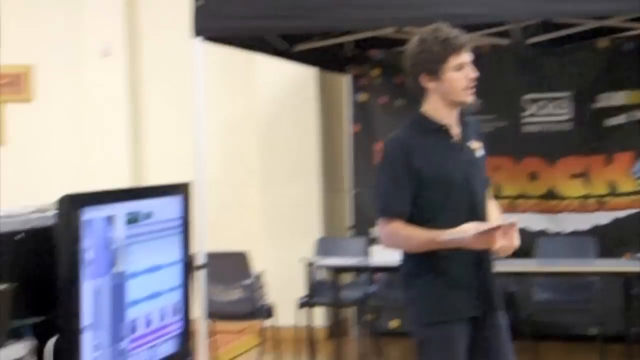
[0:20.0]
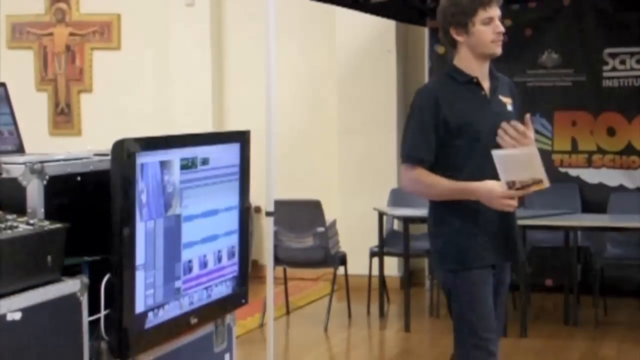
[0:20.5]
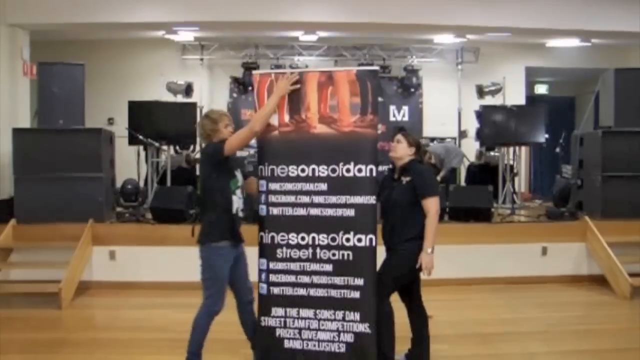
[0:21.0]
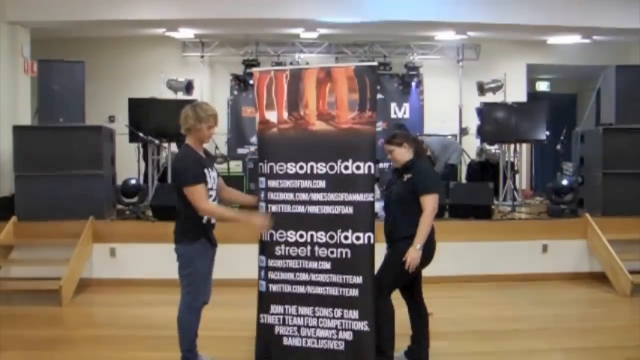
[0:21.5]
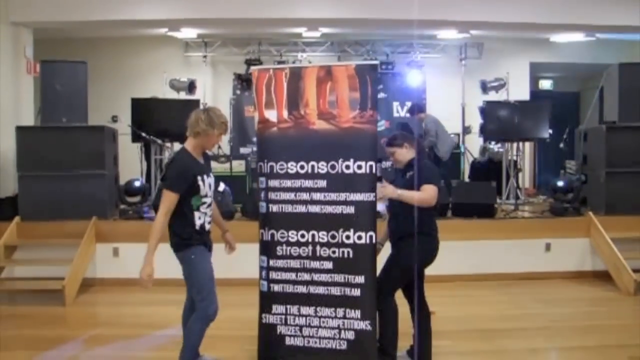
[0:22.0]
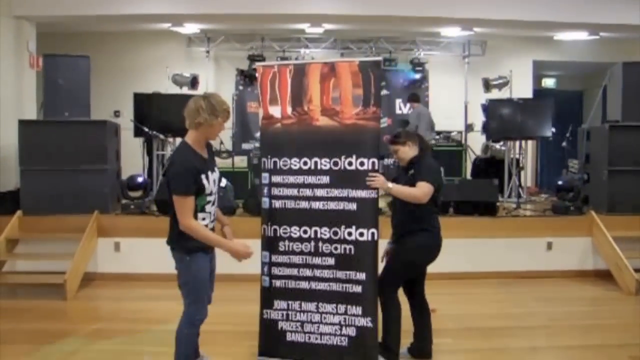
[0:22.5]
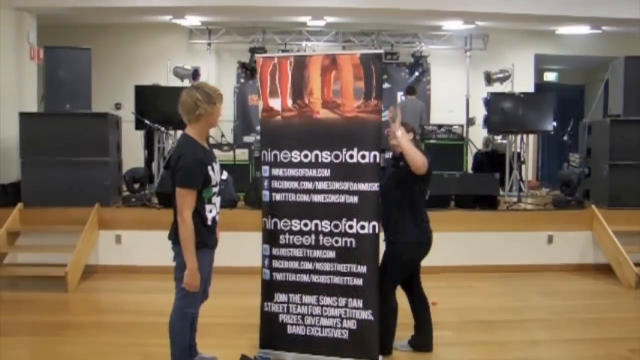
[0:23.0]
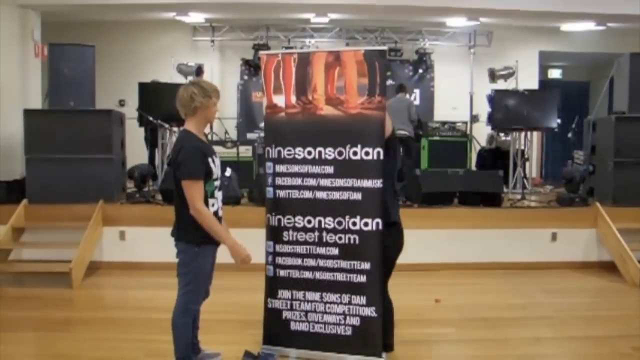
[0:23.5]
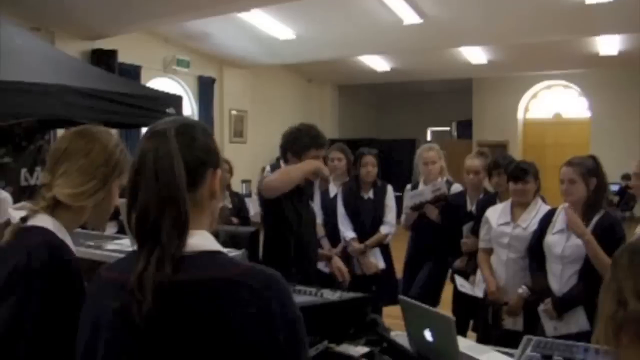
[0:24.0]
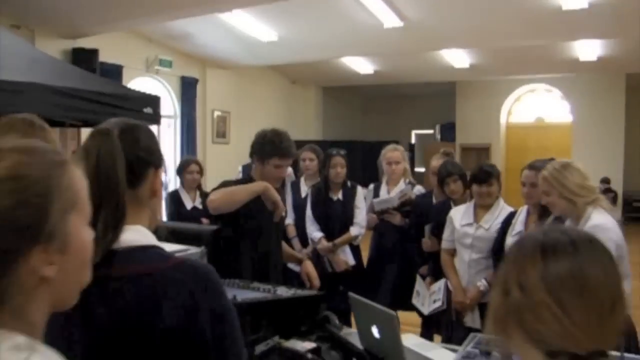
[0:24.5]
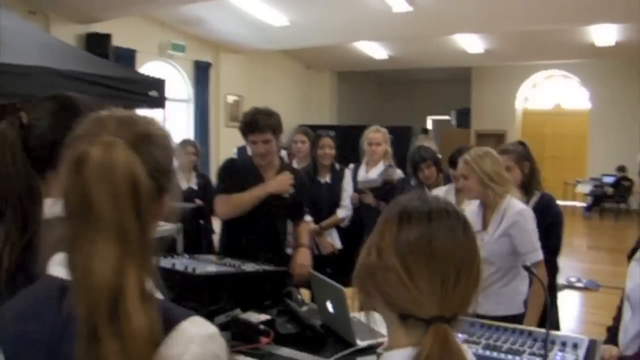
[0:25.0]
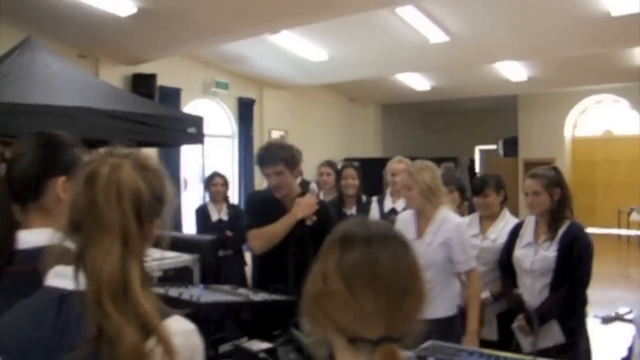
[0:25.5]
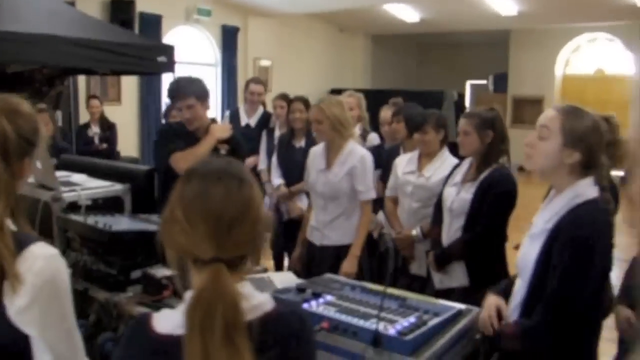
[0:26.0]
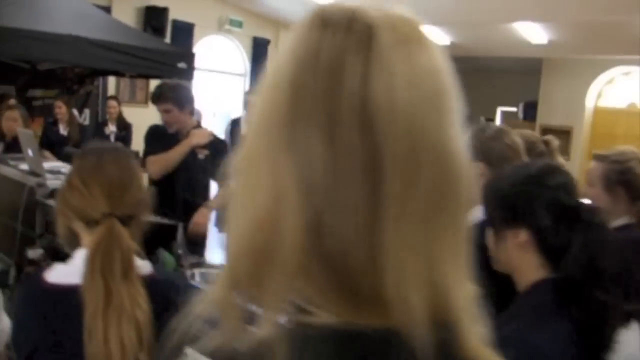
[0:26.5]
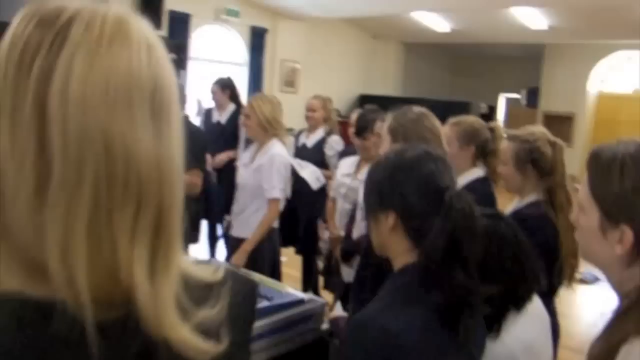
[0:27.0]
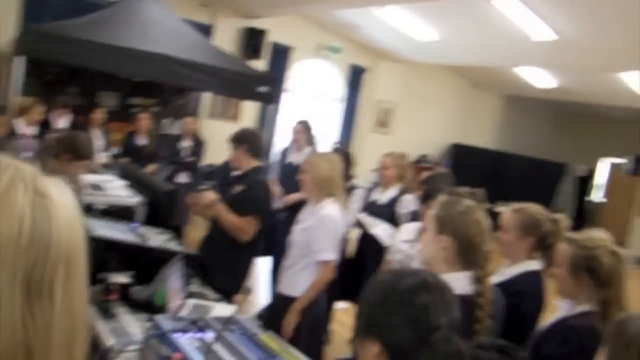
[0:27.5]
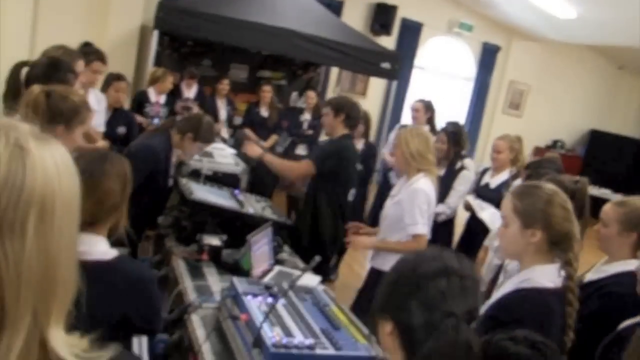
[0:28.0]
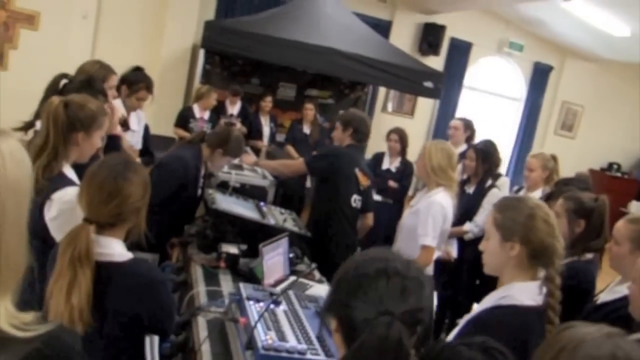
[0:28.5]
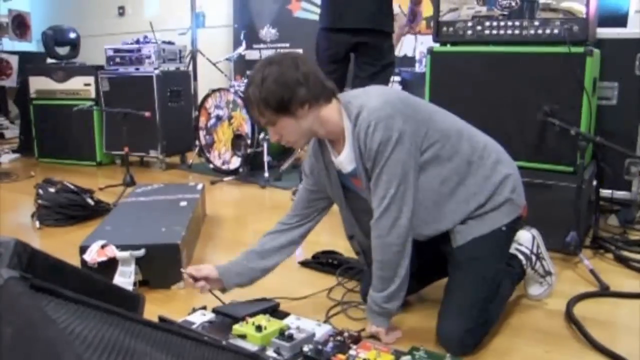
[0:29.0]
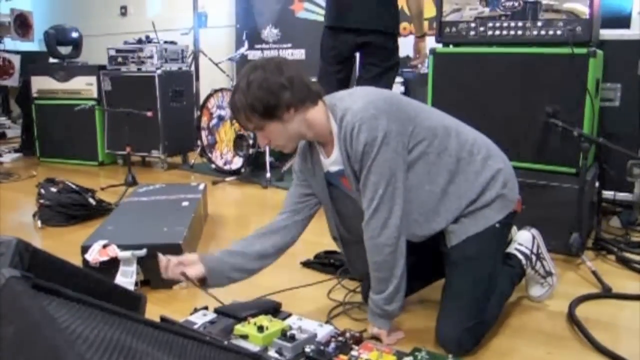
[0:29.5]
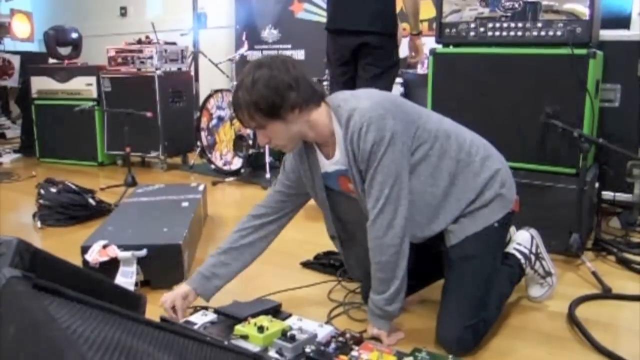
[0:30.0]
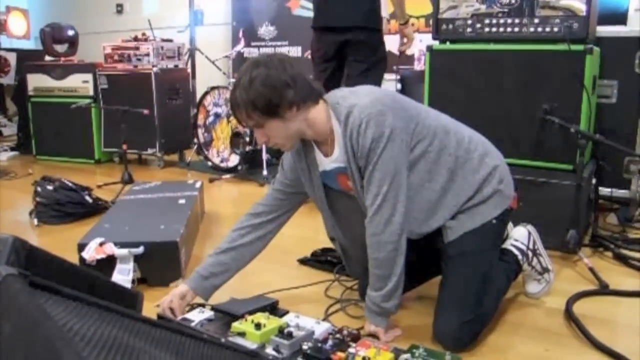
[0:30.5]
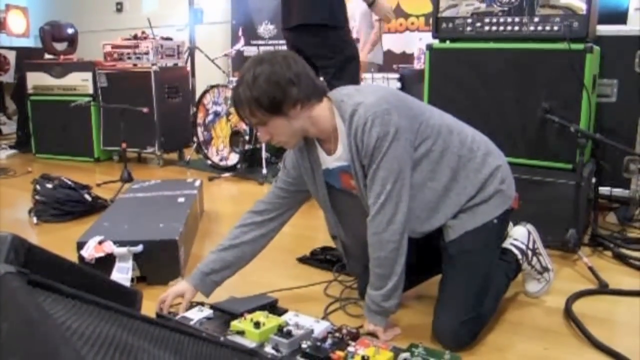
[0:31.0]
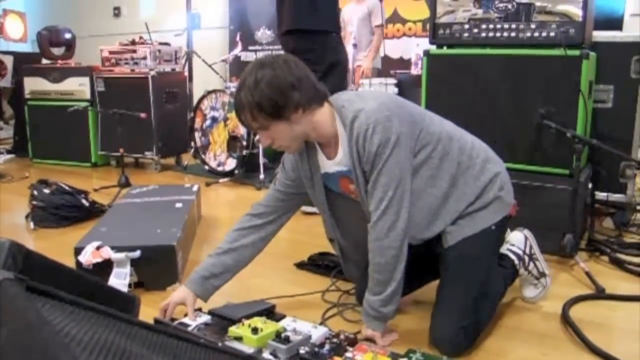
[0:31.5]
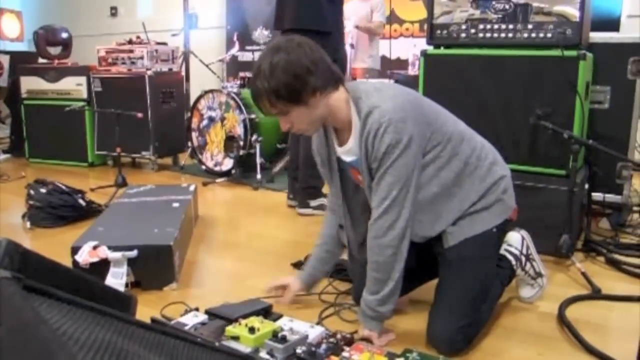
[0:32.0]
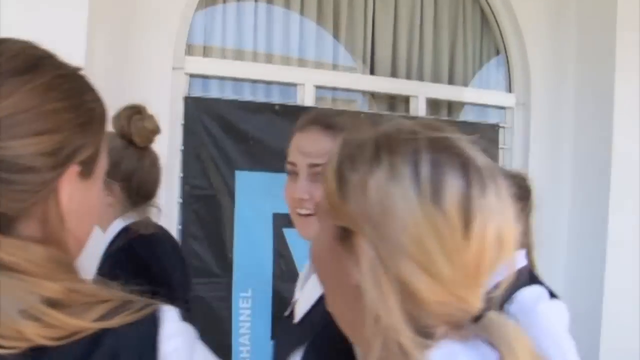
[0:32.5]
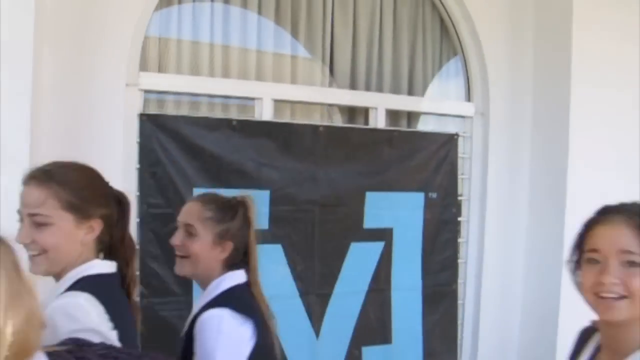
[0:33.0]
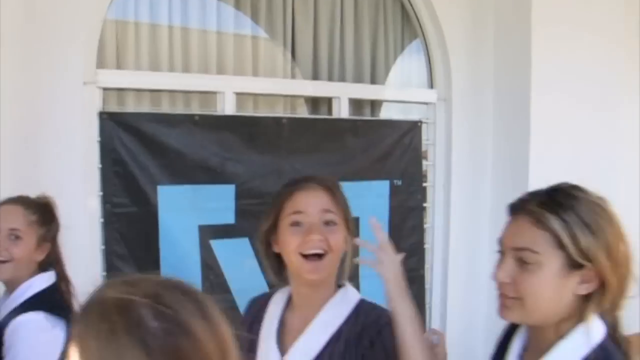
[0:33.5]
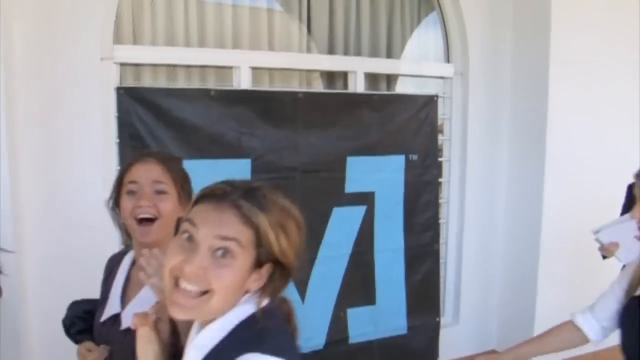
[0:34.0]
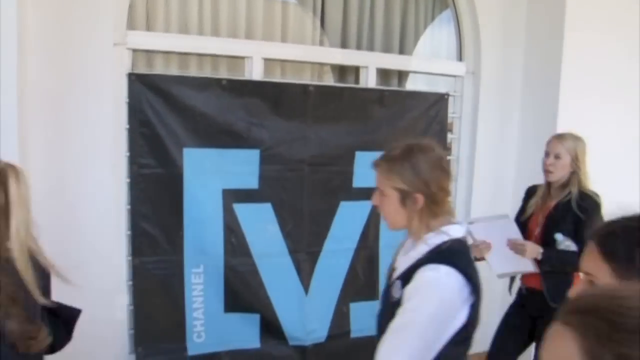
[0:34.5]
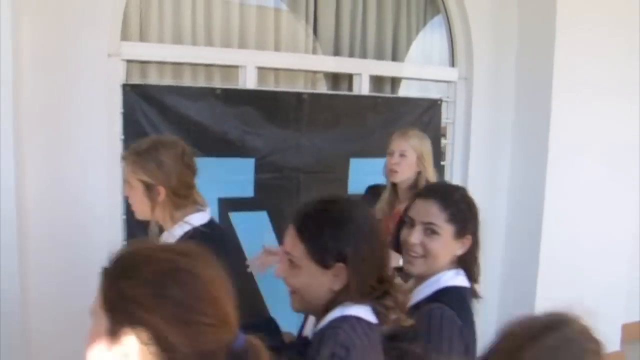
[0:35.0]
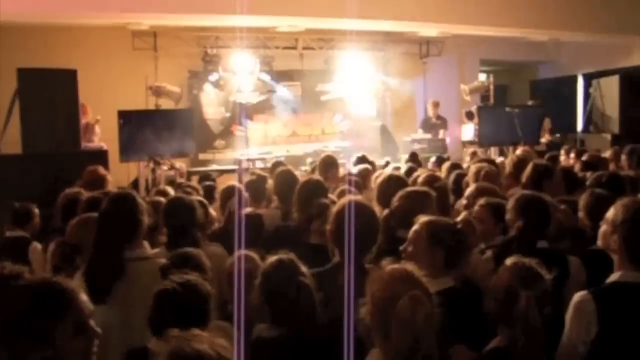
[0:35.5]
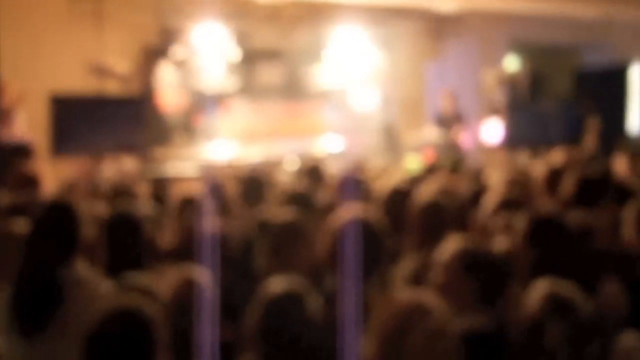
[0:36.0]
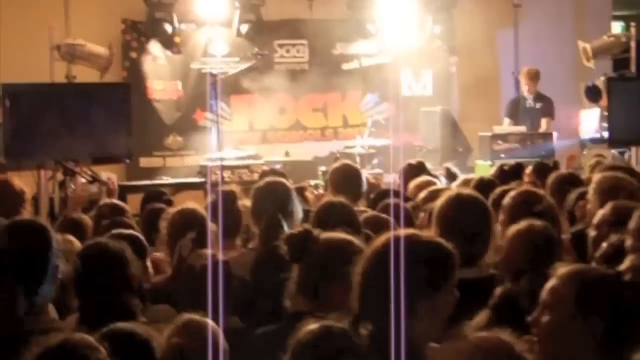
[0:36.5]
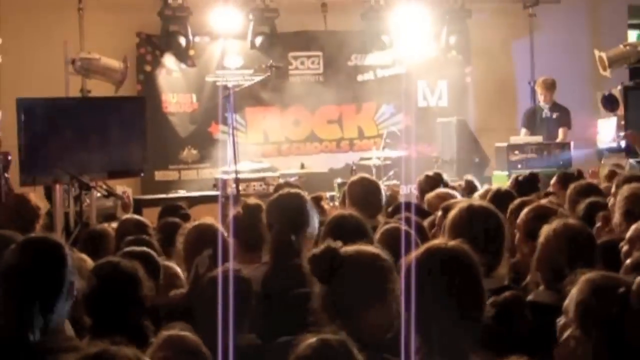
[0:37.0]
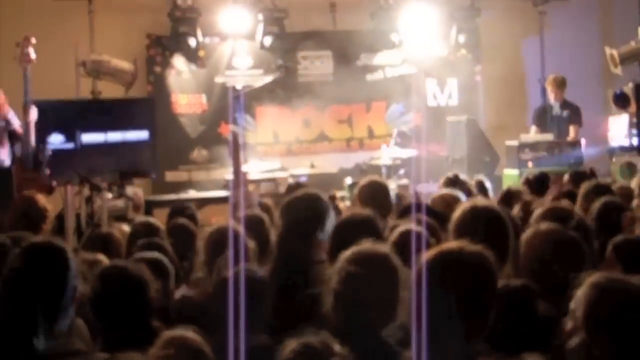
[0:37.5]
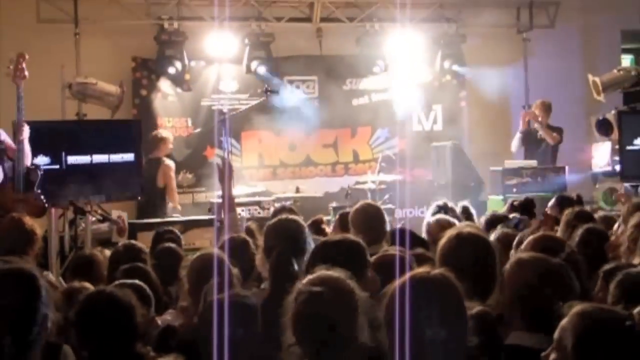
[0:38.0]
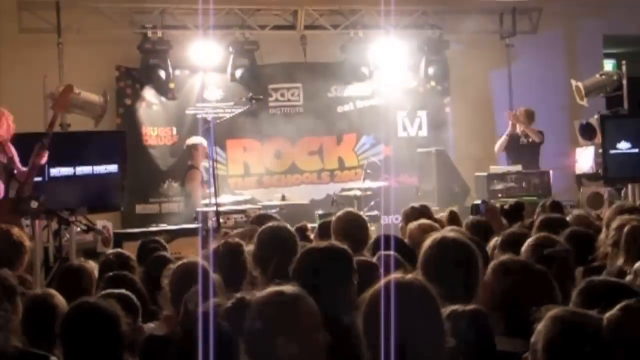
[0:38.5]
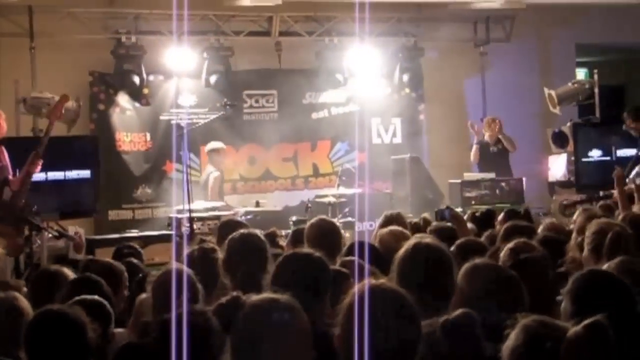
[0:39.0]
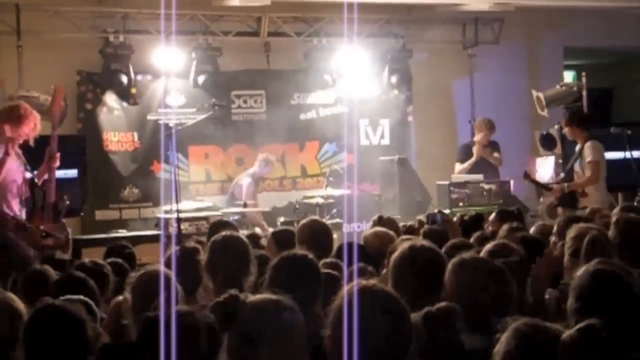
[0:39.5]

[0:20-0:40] A young man is shown standing up holding something, and then quickly two other young people appear: a blonde man on the left and a young woman with darker hair on the right. They move some signage that reads "Nine Sons of Dan" across the top, with information below it about how to use Twitter, Facebook and so on to make contact. Behind the area where they stand is a kind of musical stage, raised slightly, with amplifiers, monitors, lighting and other equipment. Next, in a kind of interior setting, young men and women are dressed up in sort of uniforms of white shirts, black vests, pants and skirts, with synthesizers and various keyboards on the left. Another shot shows a young man on stage hooking some amplifiers.